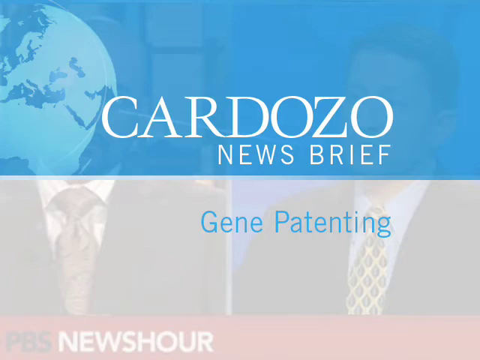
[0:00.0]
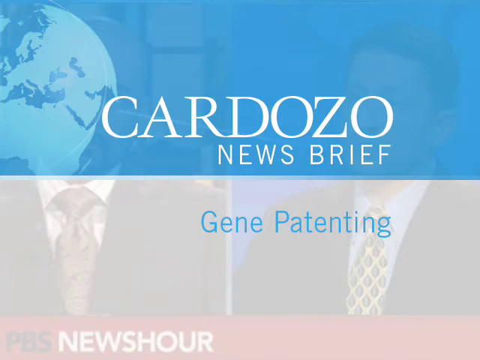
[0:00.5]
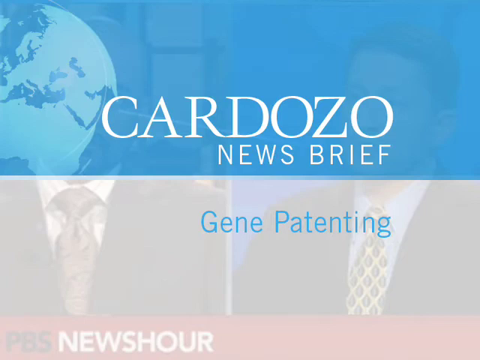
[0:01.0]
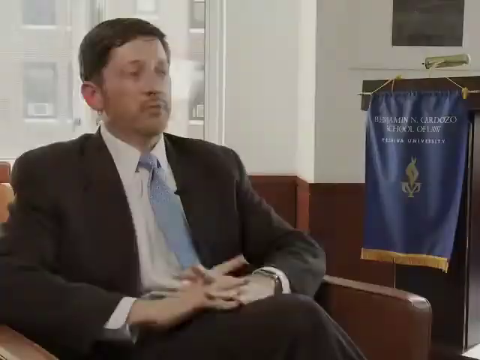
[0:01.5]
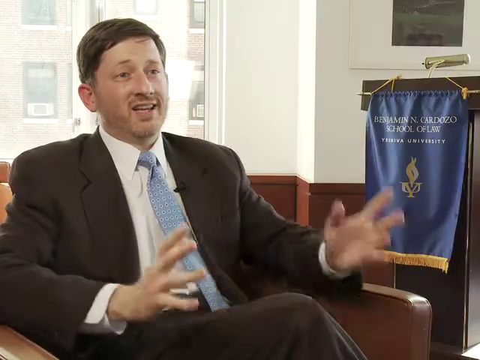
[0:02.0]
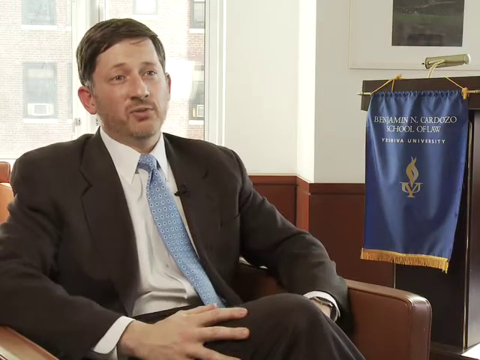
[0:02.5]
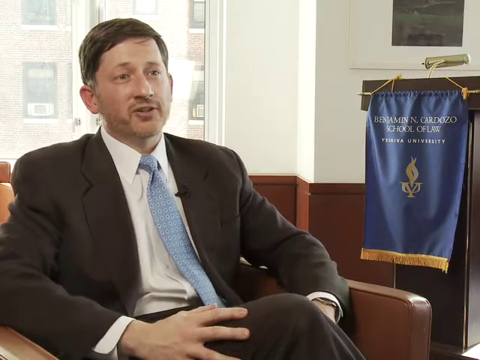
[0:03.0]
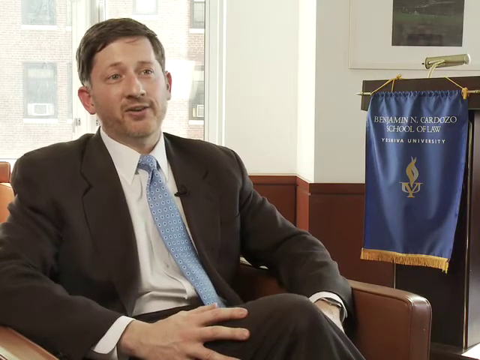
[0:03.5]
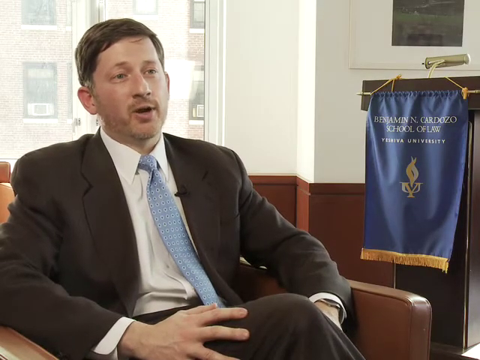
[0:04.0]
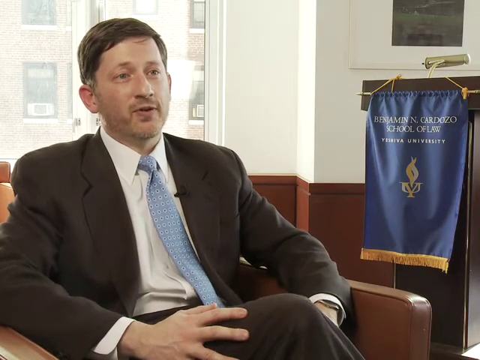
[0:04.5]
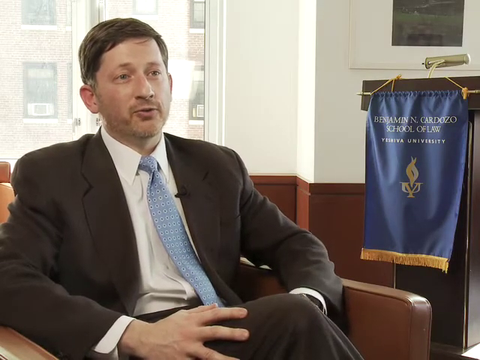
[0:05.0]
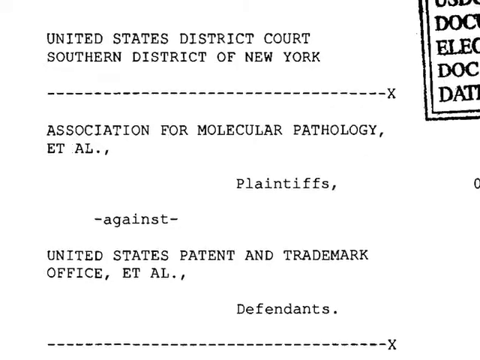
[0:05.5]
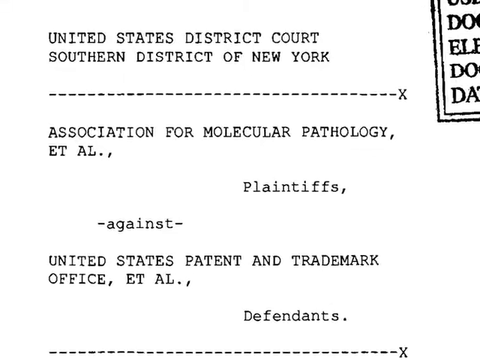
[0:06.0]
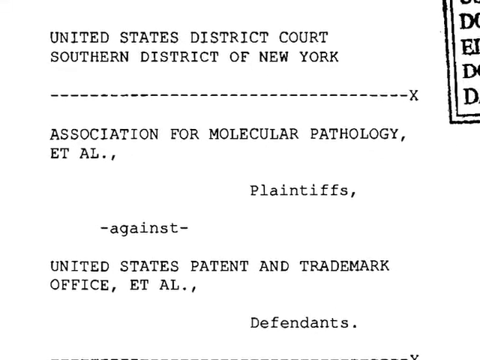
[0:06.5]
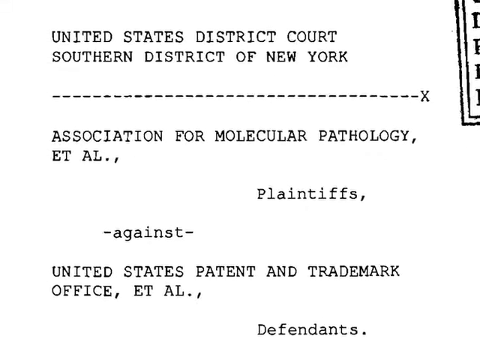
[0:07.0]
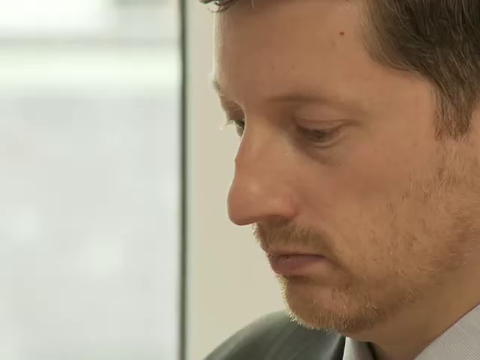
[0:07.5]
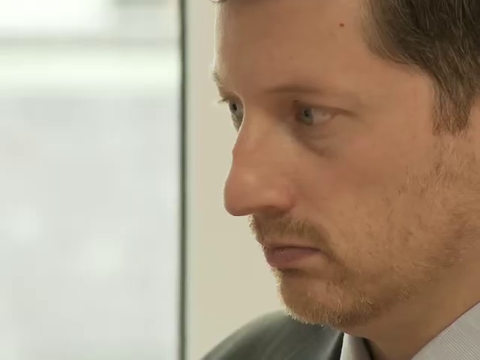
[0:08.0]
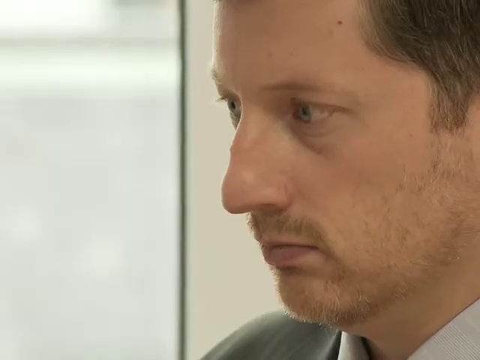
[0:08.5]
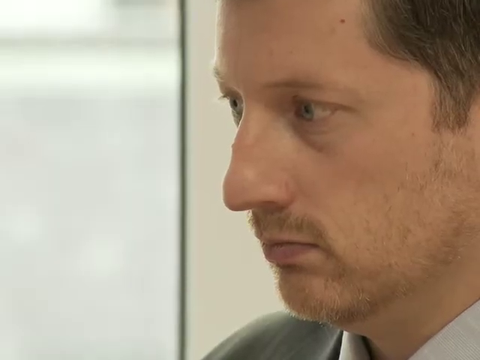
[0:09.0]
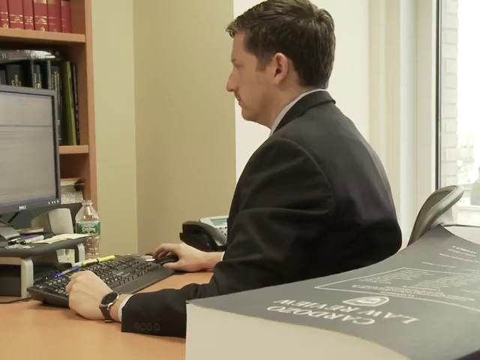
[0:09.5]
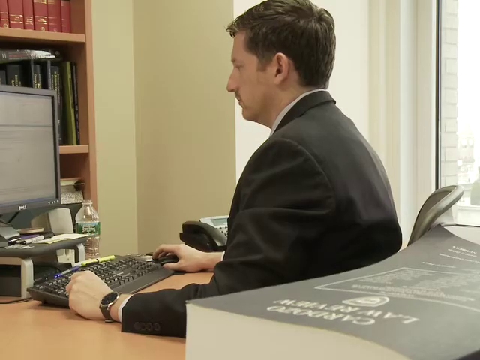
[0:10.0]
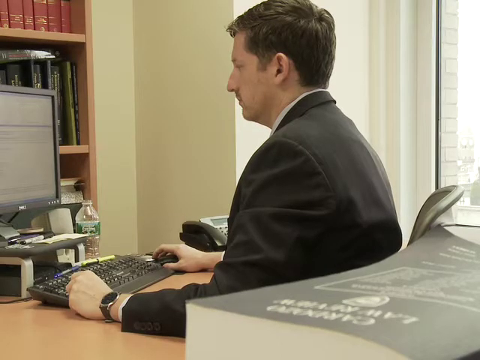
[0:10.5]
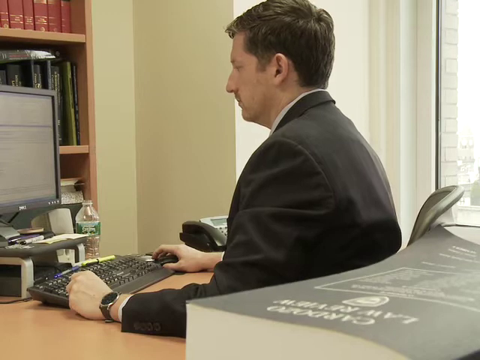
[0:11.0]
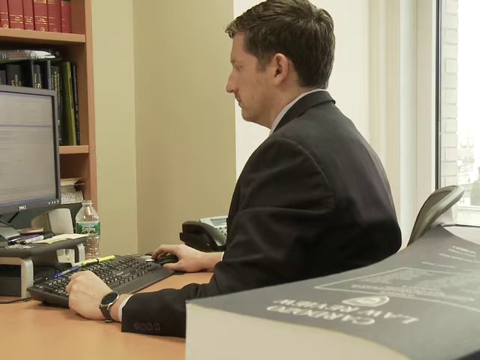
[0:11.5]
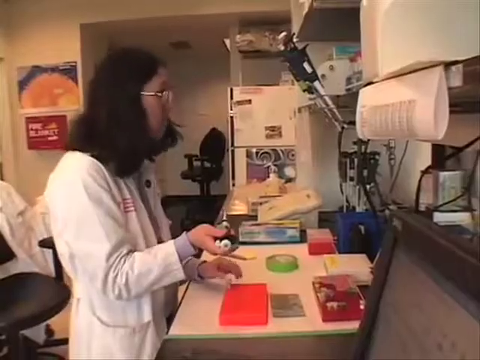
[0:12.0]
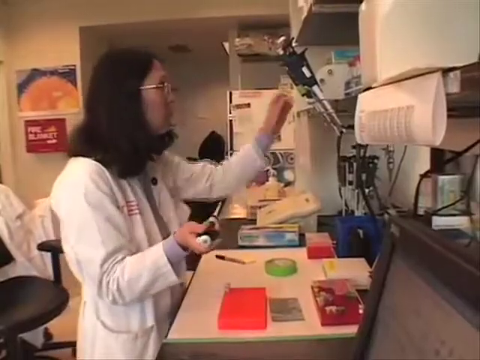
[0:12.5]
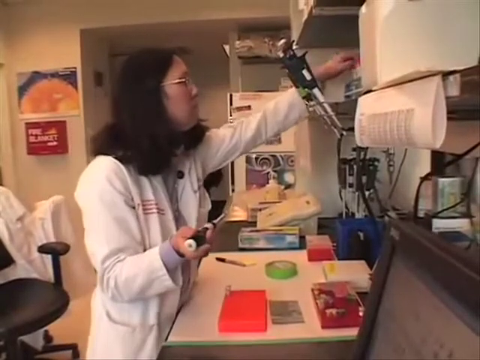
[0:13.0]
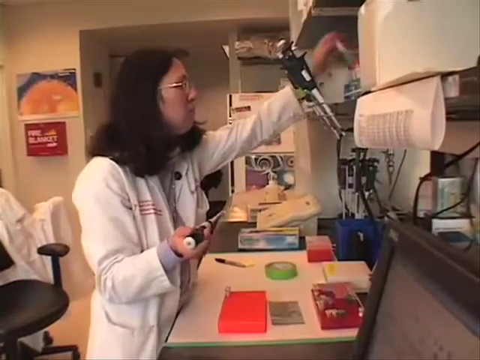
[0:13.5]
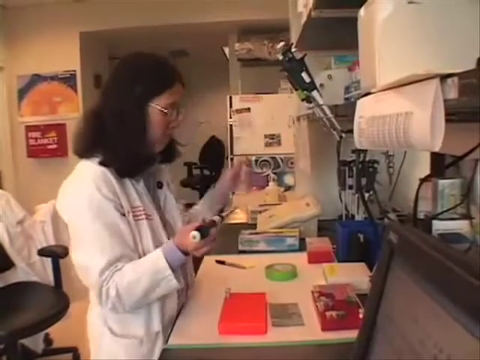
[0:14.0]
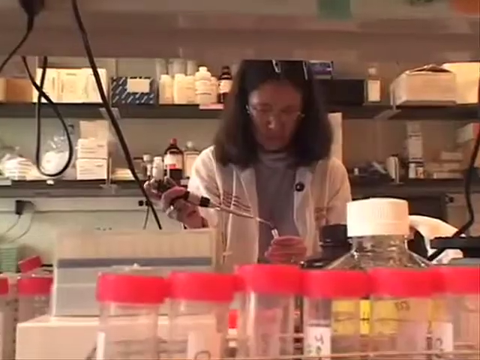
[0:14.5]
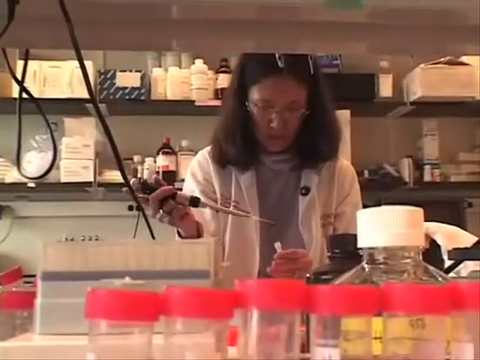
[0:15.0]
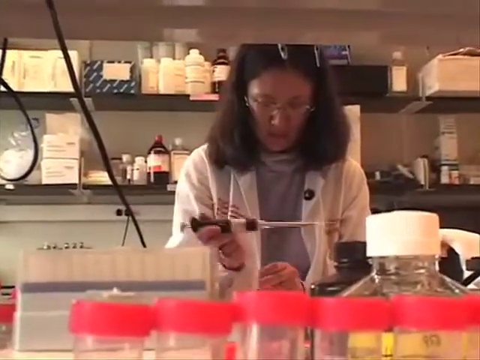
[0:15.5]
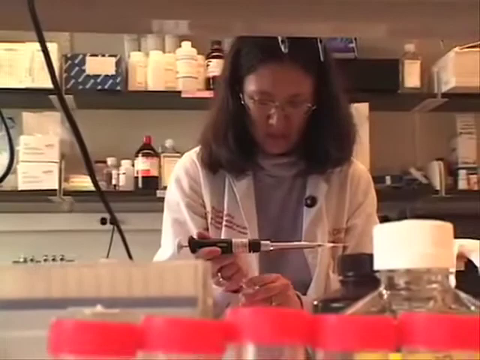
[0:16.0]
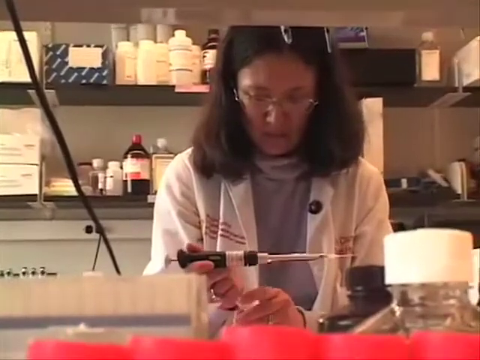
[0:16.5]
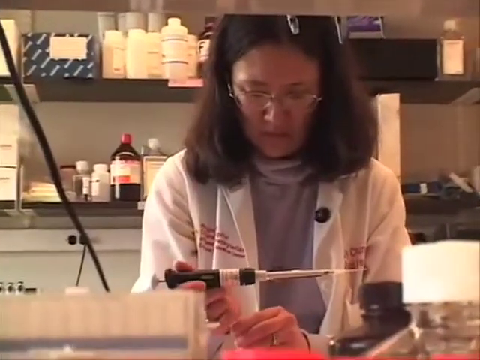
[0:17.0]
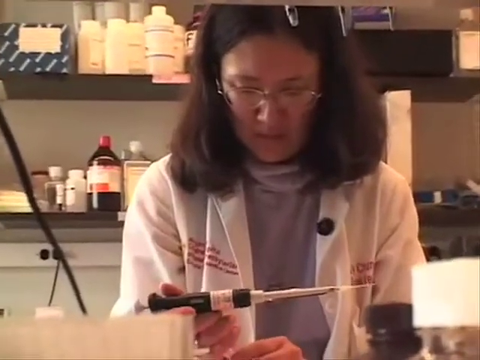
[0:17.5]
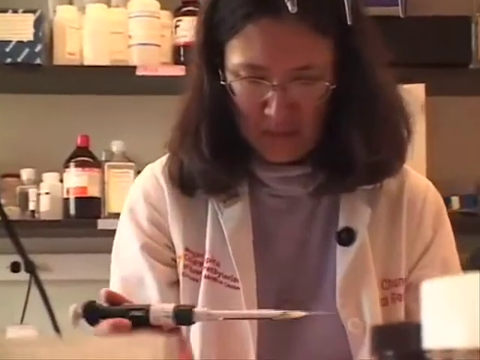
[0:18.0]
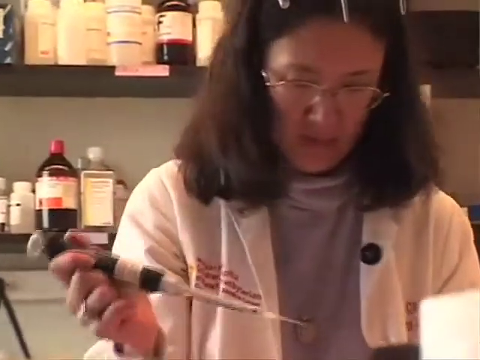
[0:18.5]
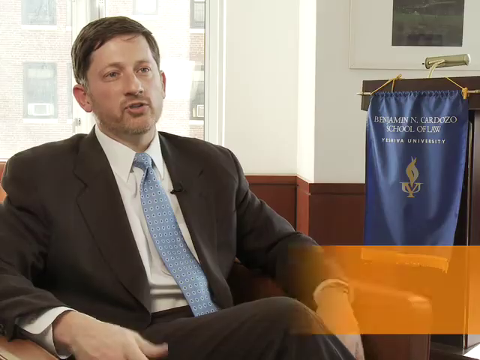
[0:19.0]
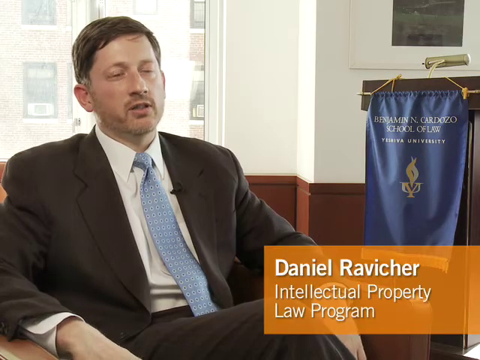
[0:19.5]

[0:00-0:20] The video frame is slightly wider than it is tall and is divided into a top and bottom half, separated by a blue line that goes from a really light blue to a medium blue from left to right. The top half has a medium blue background, with big capital white letters centered at its bottom that say "Cardozo Newsbrief." The bottom portion has a hazy whitish-gray background with medium blue letters that say "Gene Patenting." There are semi-transparent graphics: in the upper left is the globe of the Earth, with only its right half visible, showing Africa, Europe and Asia. Behind all this is another semi-transparent graphic of two men, one on the left and one on the right, seen from about the bottom of the chest up; both wear suit coats and ties and face the viewer. The video then goes to a single man talking toward the camera. He is sitting in a chair on the left-hand side, facing somewhere around the lower right-hand corner, and looks like he is being interviewed. His knee is visible at the bottom of the screen, his right hand is on his knee, and he wears a black suit coat.